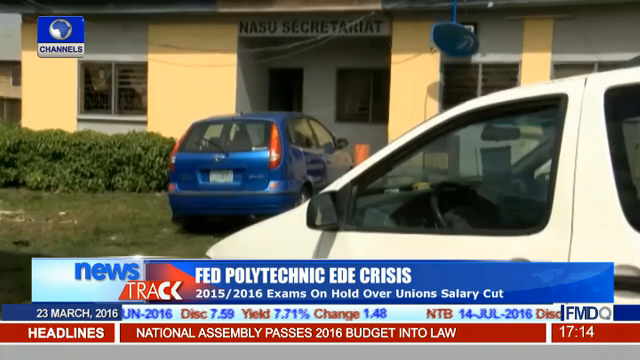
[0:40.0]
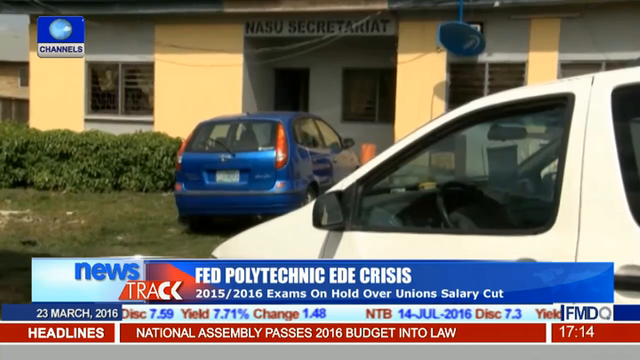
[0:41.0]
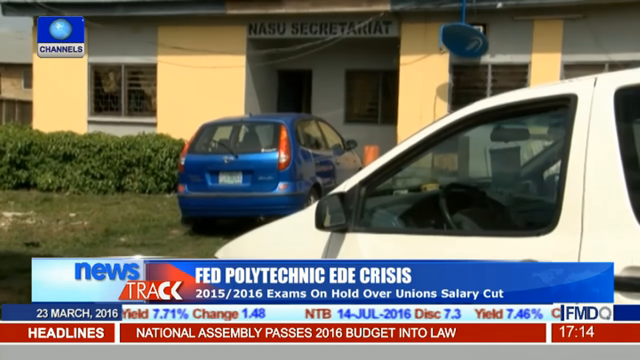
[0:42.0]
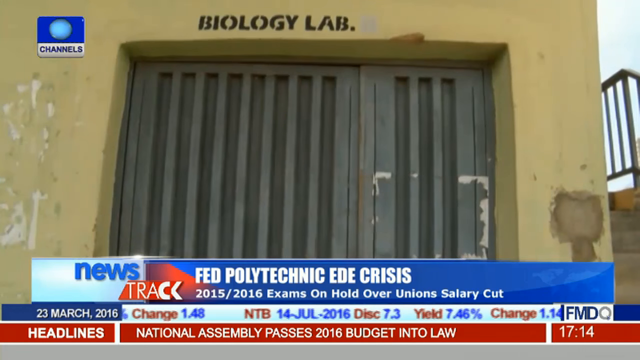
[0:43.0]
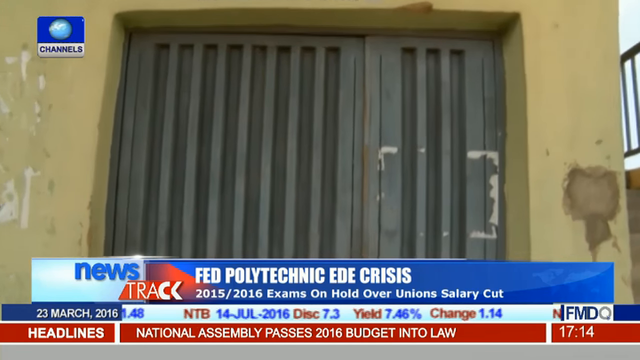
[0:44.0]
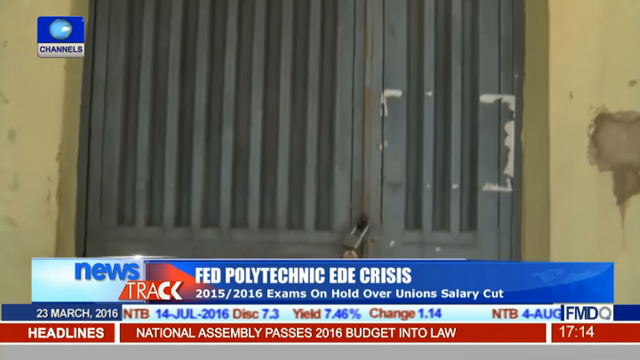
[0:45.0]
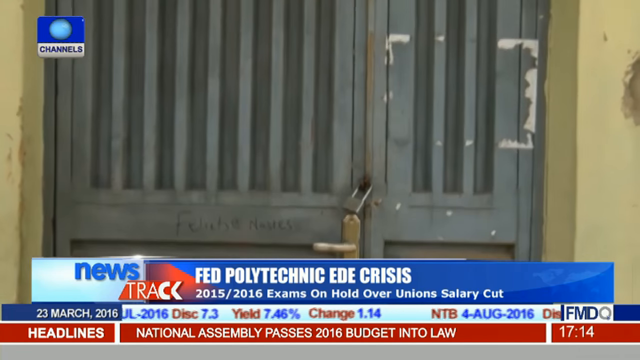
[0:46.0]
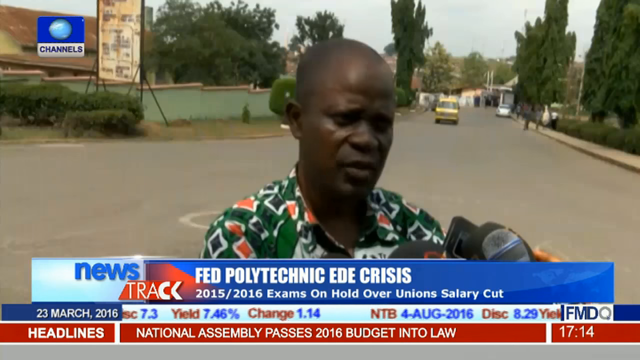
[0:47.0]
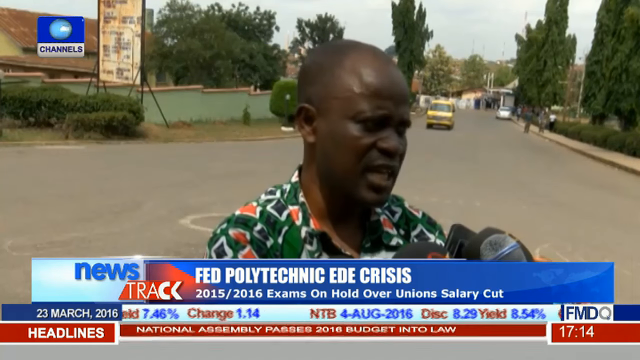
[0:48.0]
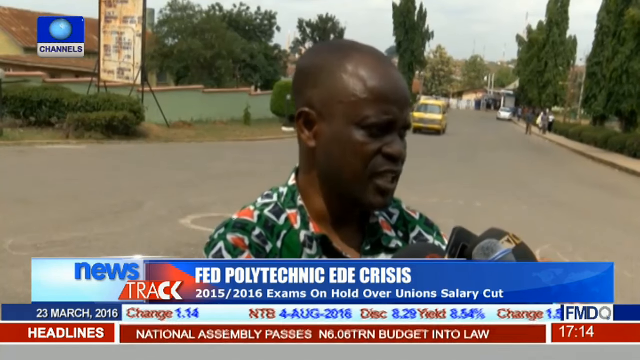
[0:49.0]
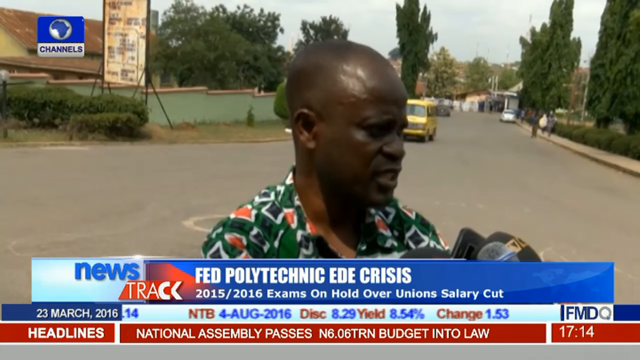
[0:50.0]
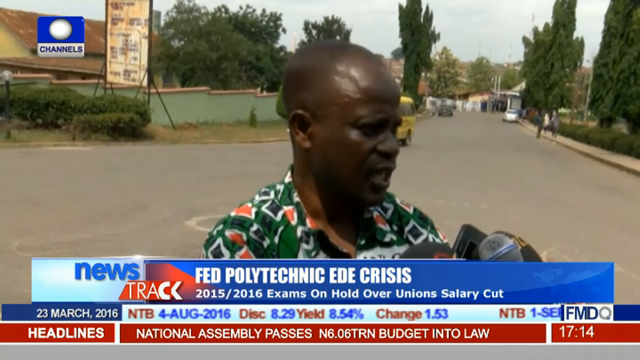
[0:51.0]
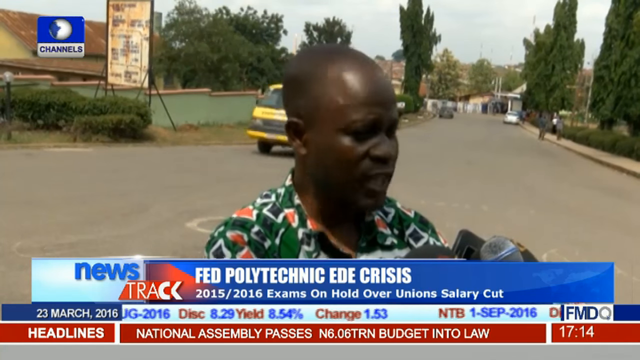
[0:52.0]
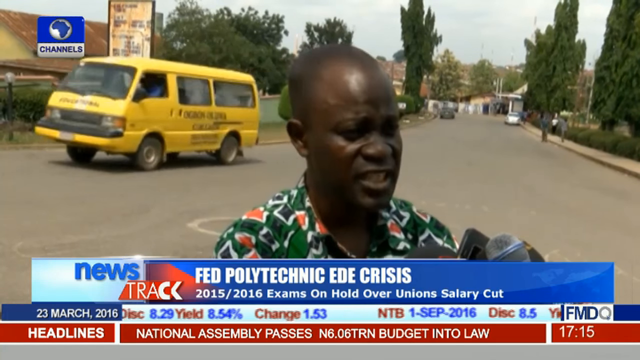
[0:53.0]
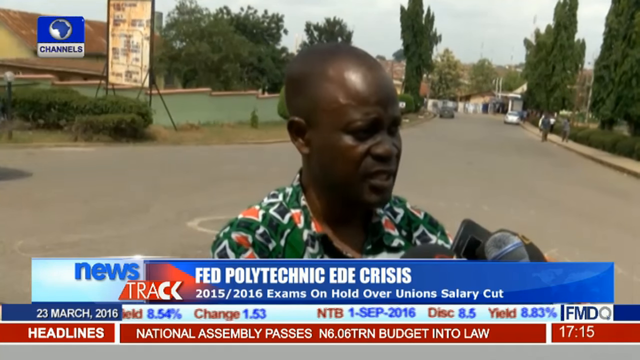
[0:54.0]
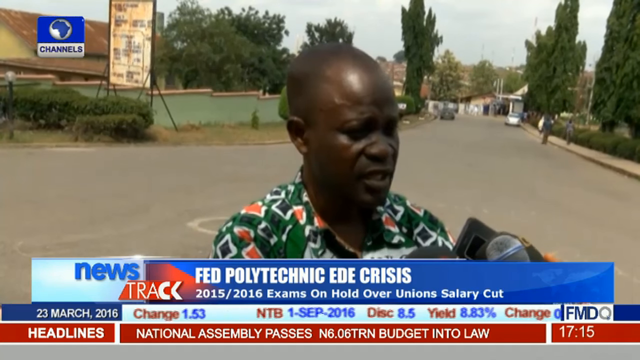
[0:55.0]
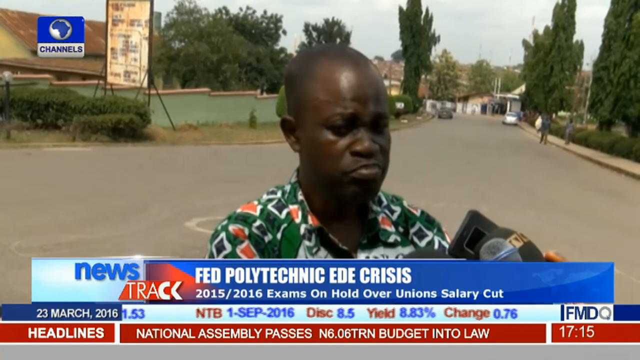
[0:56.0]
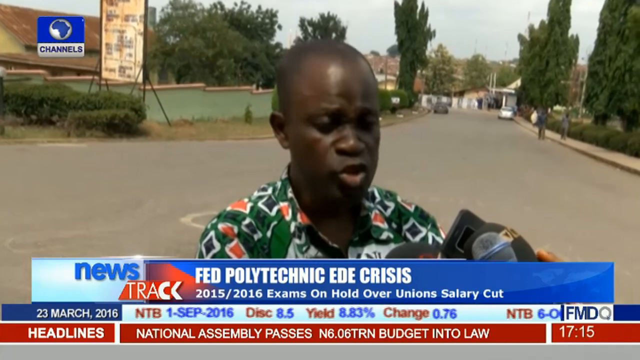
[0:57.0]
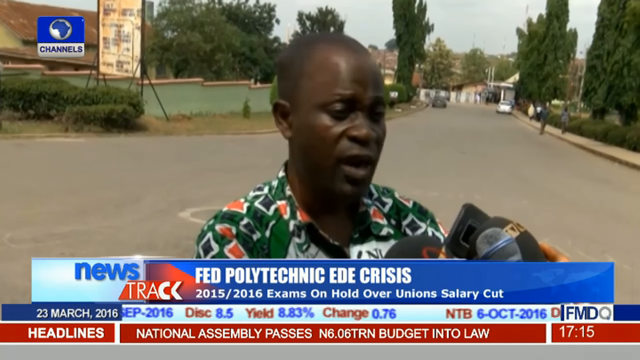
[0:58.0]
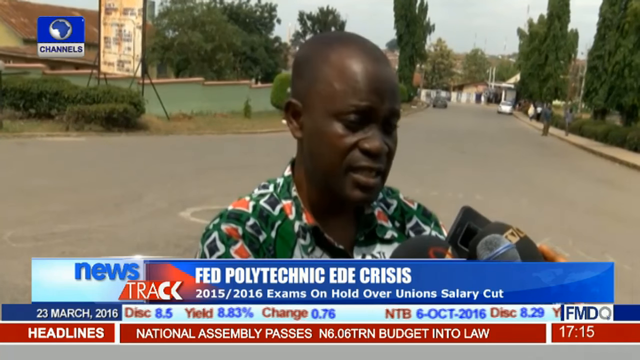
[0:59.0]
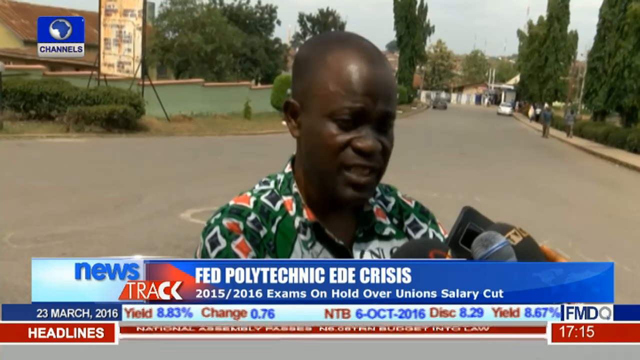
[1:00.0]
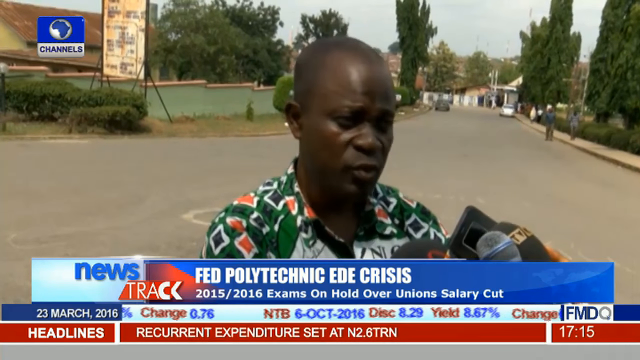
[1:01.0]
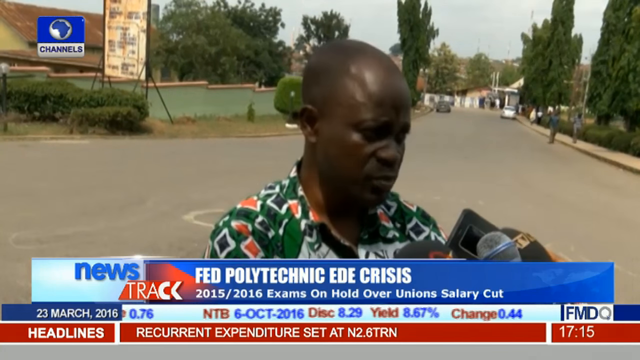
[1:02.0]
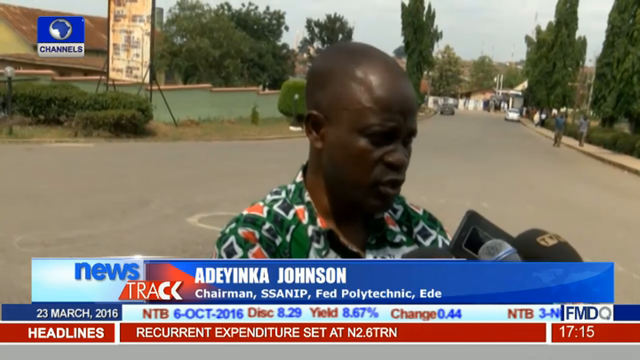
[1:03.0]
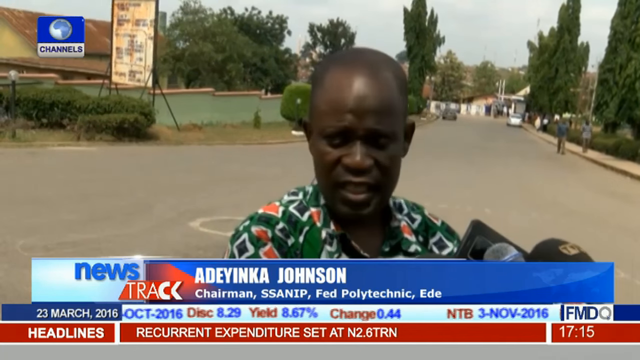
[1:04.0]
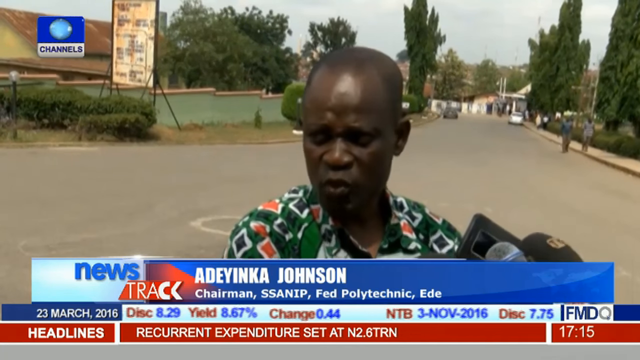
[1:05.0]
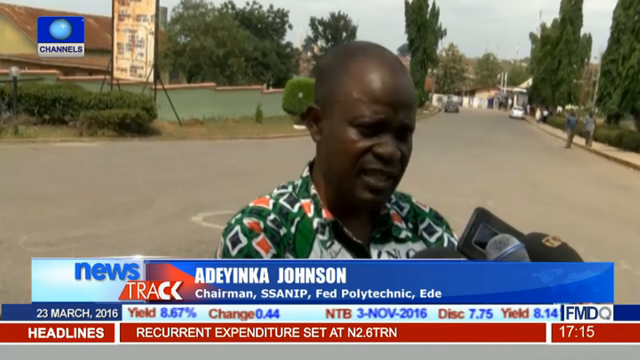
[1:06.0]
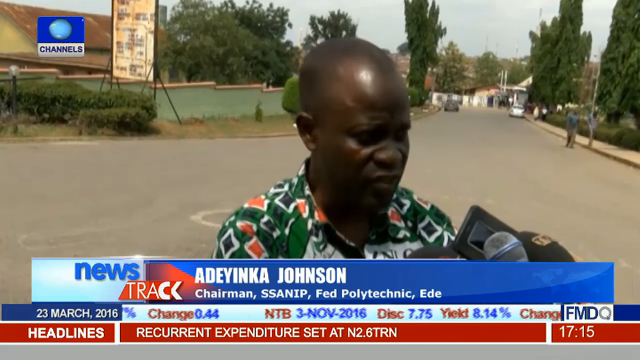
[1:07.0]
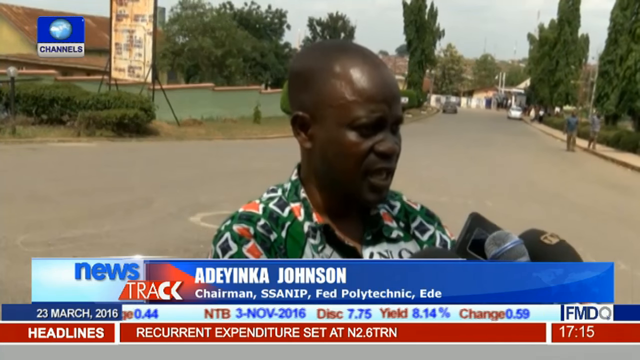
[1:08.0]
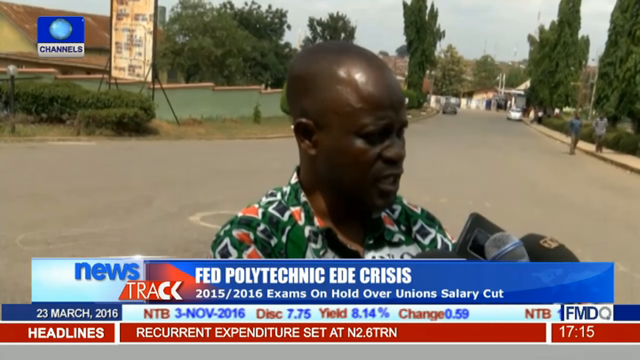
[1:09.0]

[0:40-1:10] A yellow building has a blue car and a white van parked in front. The news channel's ticker banner at the bottom of the screen still reads 'news track' and also 'Polytechnic EDE crisis'. The camera pans to a part of the outside of the building marked 'biology lab', which has a metal door, and zooms in to the door to show that it is locked. The scene changes to an interview in the street with a black man in a bright green shirt as a yellow car comes behind him. Many microphones are in front of him. He talks carefully with the reporters, seems to know what he is talking about, and is very communicative. At one point he shrugs his shoulders and looks away, then looks back to the reporter and continues speaking, appearing very comfortable and knowledgeable.